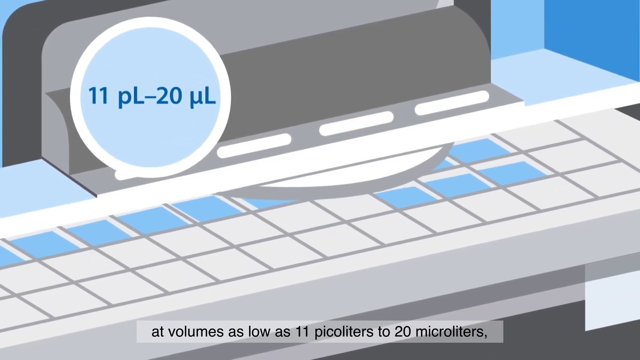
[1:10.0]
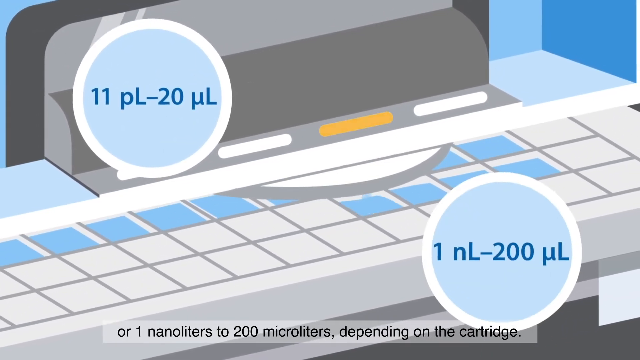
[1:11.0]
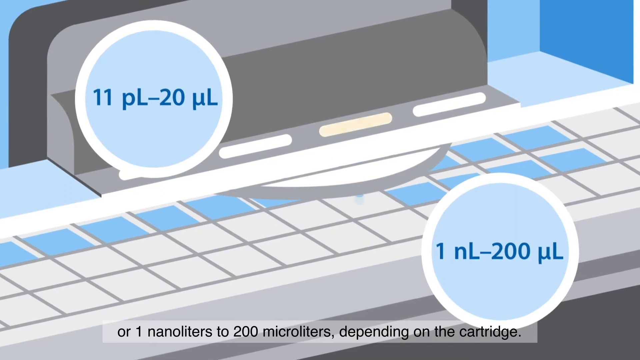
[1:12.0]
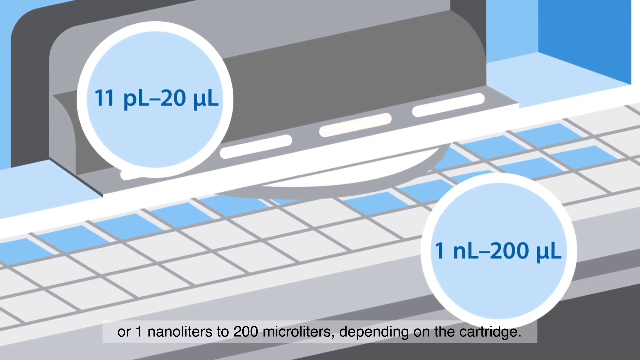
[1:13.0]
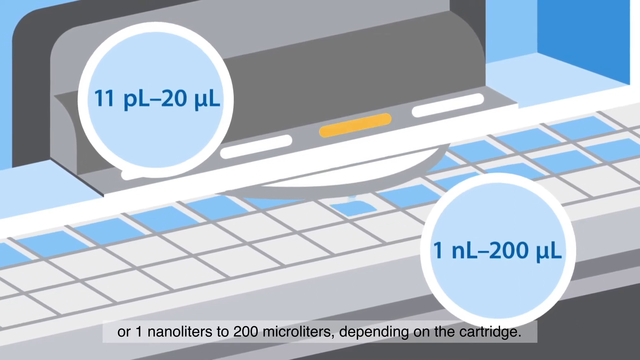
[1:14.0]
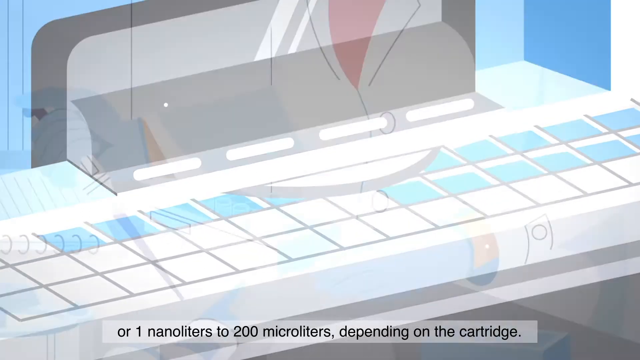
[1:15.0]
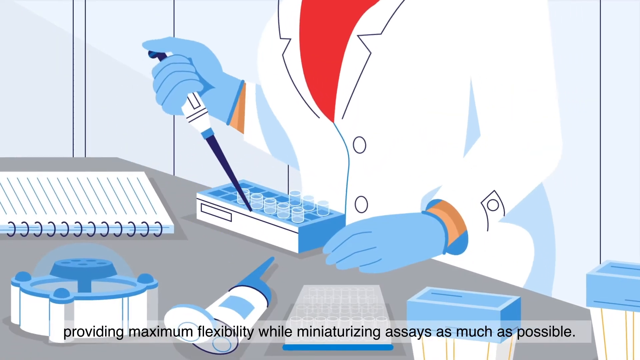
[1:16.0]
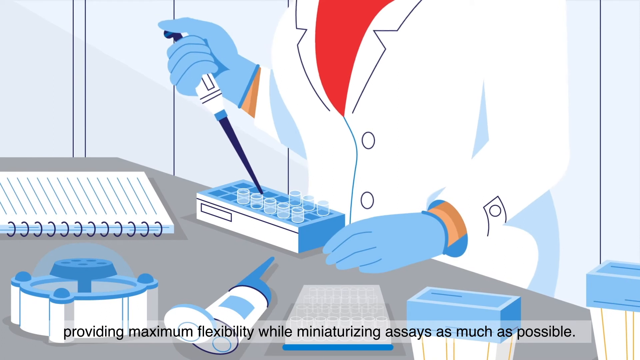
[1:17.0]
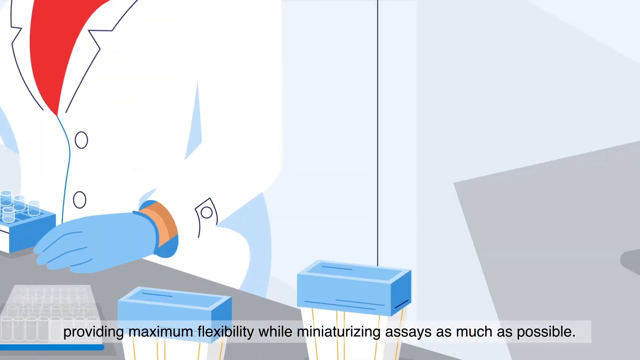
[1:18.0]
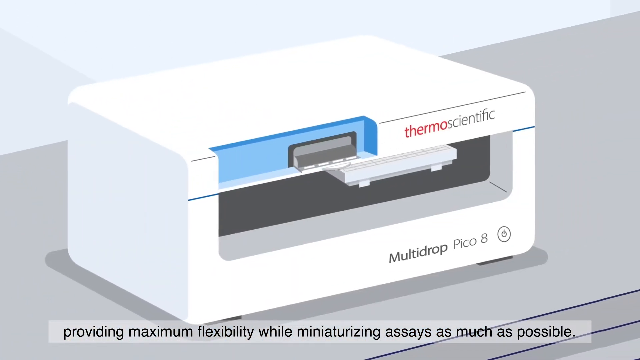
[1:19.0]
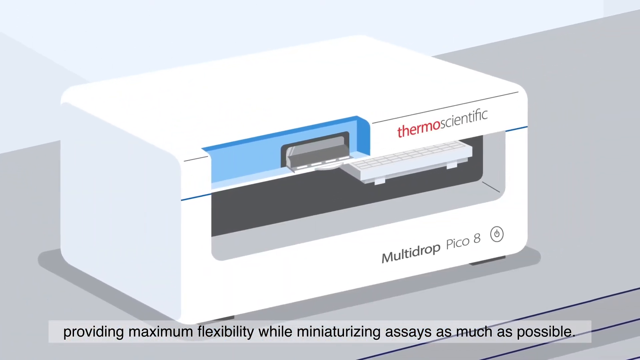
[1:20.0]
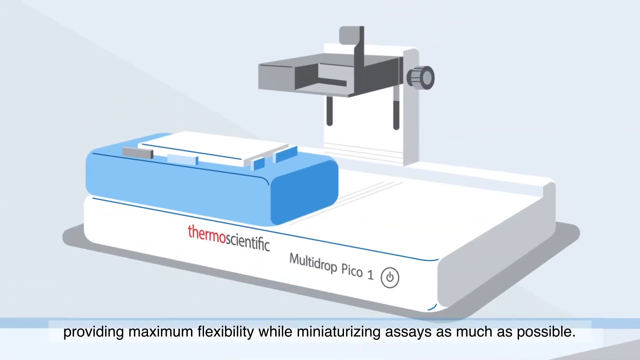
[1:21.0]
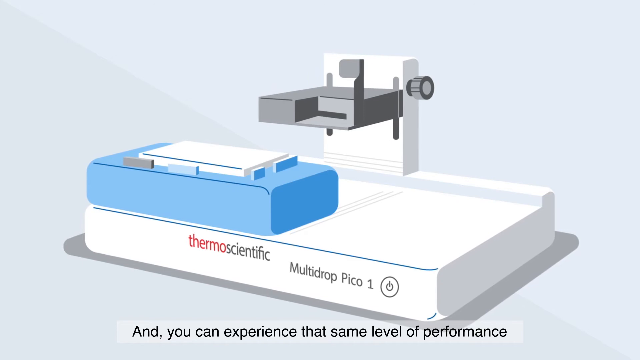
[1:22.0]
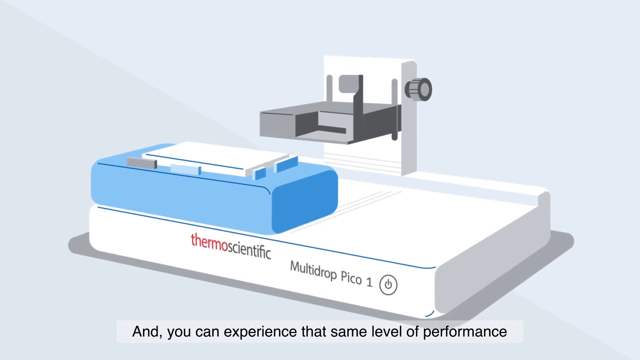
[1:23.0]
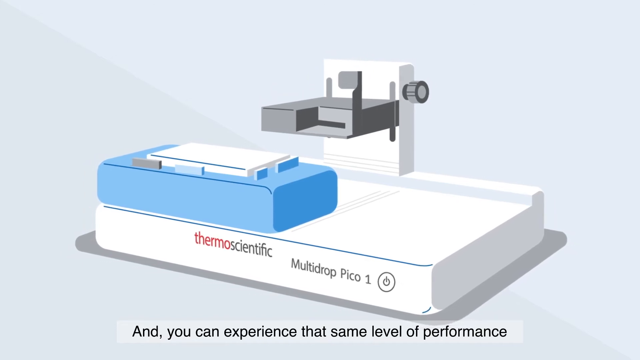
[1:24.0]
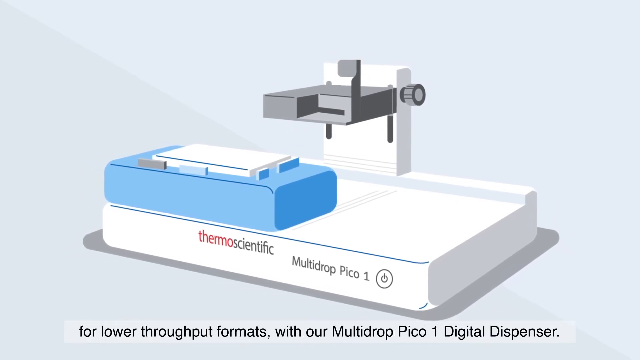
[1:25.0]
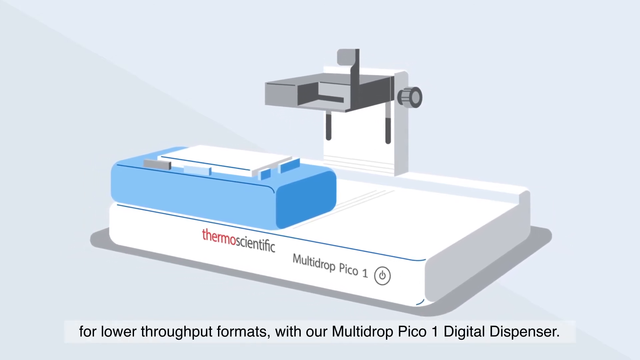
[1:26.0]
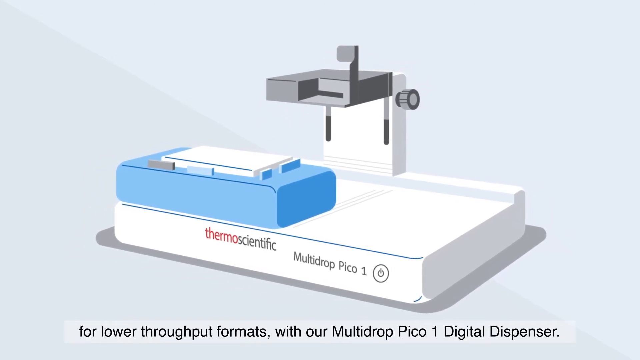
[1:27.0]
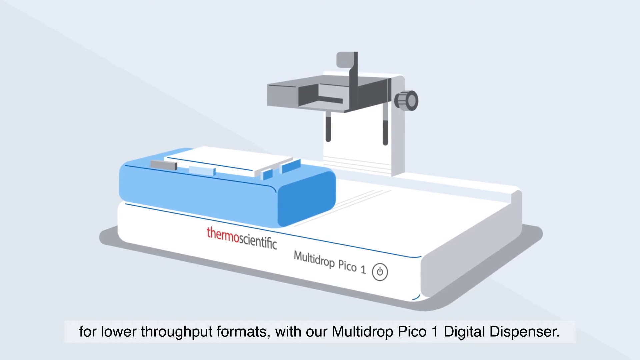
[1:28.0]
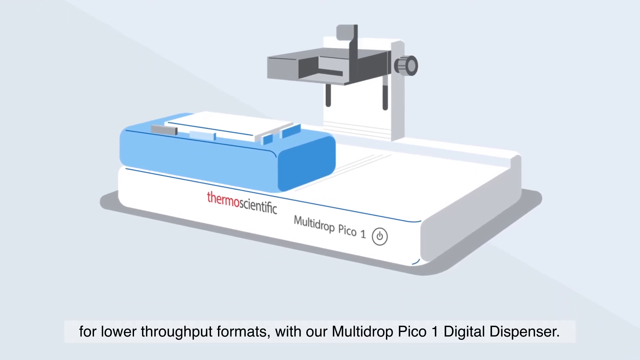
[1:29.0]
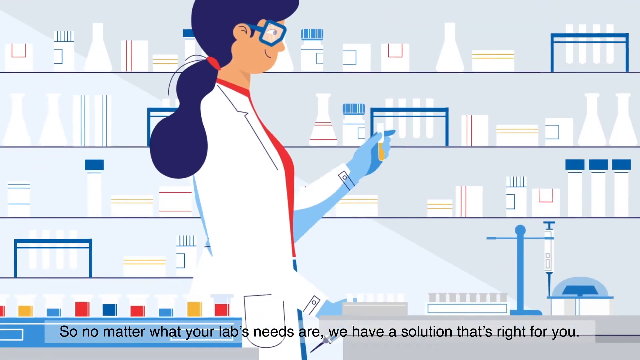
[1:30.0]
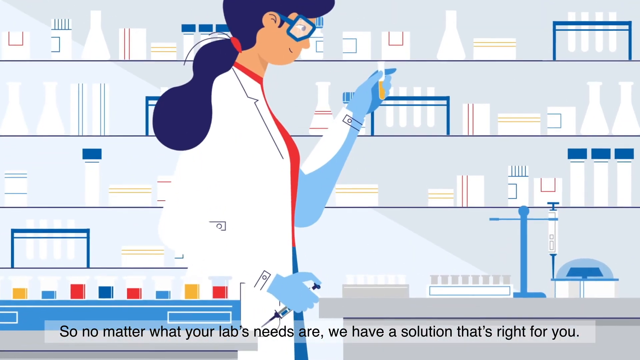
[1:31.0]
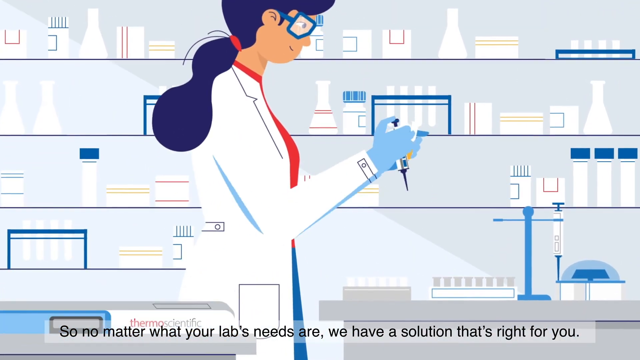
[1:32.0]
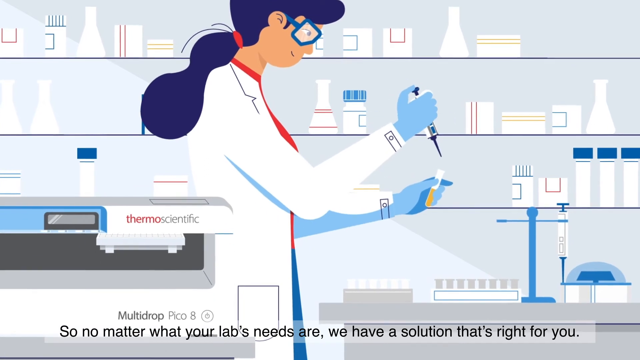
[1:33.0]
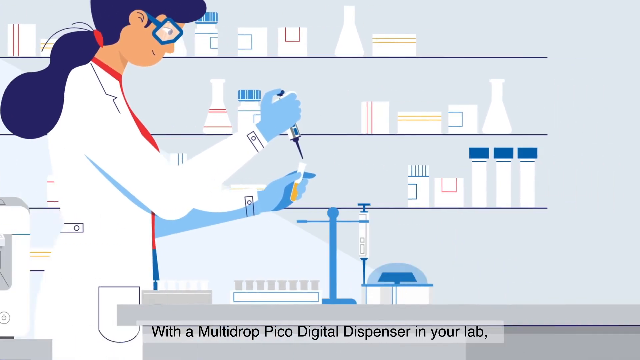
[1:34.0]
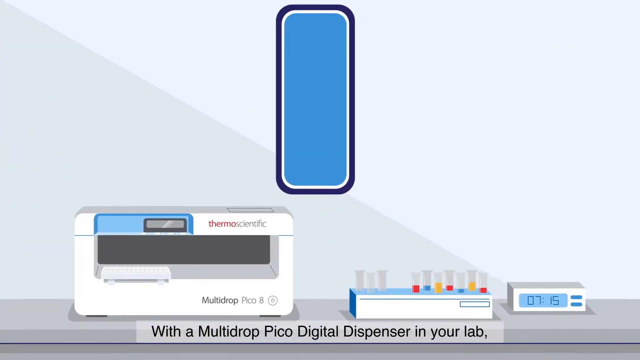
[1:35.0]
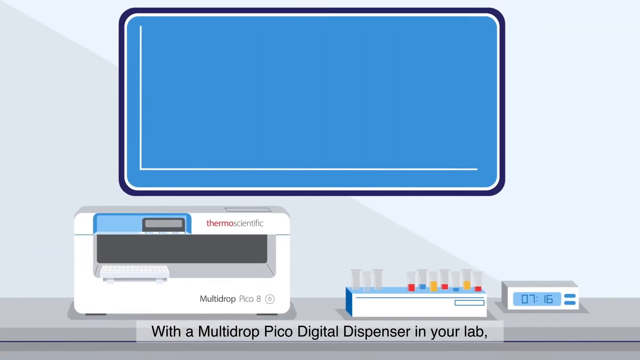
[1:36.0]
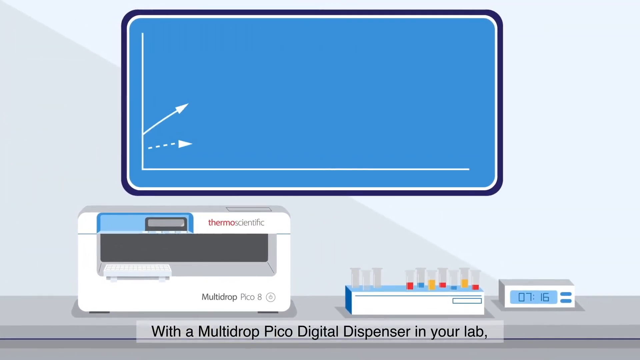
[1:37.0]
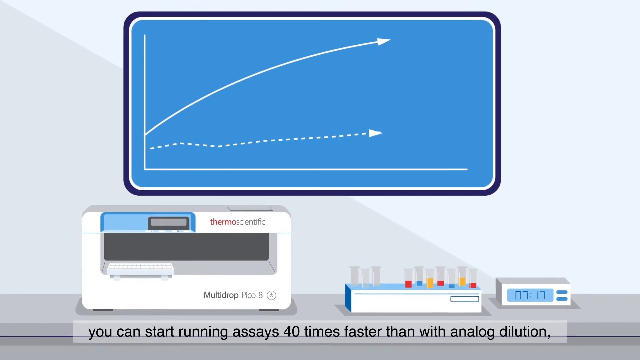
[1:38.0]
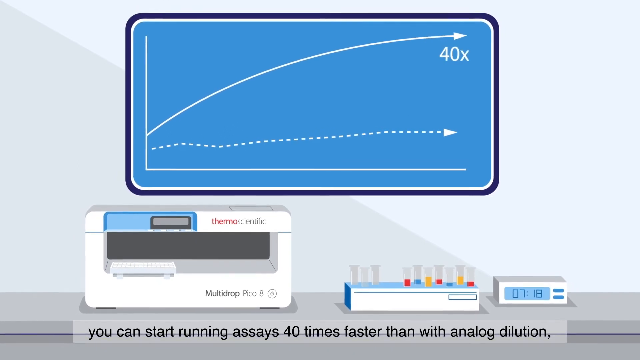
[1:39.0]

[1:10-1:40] Some kind of machine drops what looks like blue fluid into little white squares on a tray of some sort. The scene switches to an illustrated, cartoonish woman wearing a lab coat with a red shirt underneath and blue gloves of some sort. She holds some kind of dropper device in her right hand. In front of her is a tray full of vials that she is apparently filling with the needle nose device, dropping some kind of blue fluid into the vials. In front of the vial holder there is a notepad or some kind of book with a spiral. The video then switches to a machine labelled "Thermoscientific Multidrop Pico-8", with a power button at the bottom right and an LED screen at the top middle.